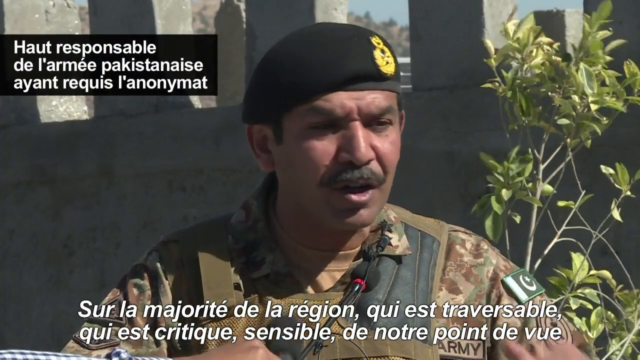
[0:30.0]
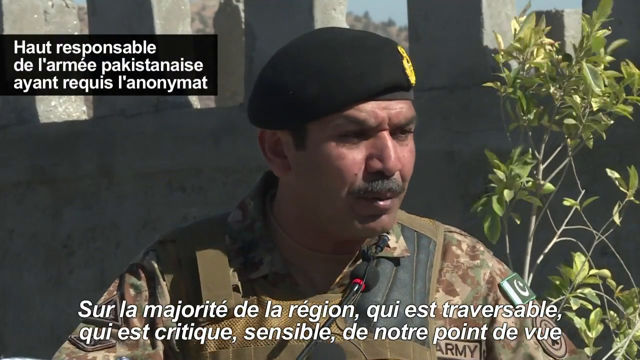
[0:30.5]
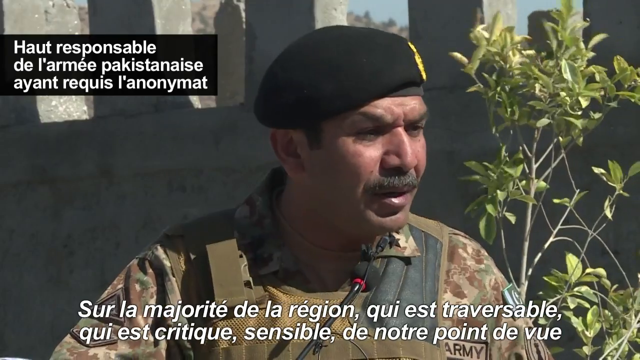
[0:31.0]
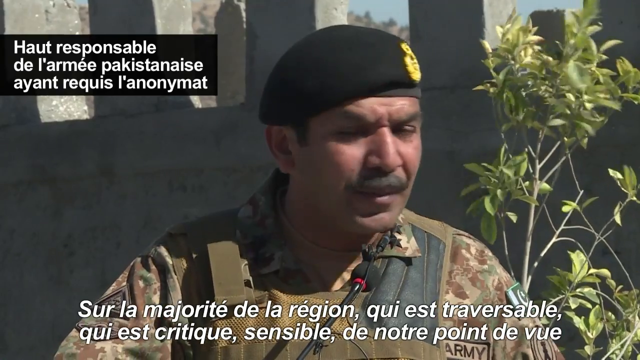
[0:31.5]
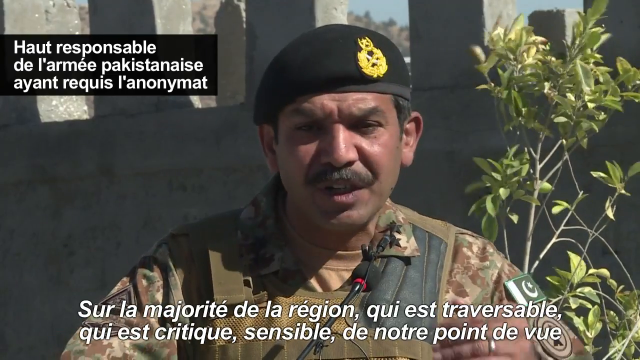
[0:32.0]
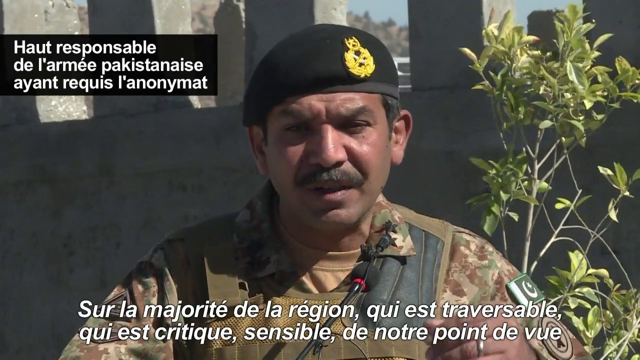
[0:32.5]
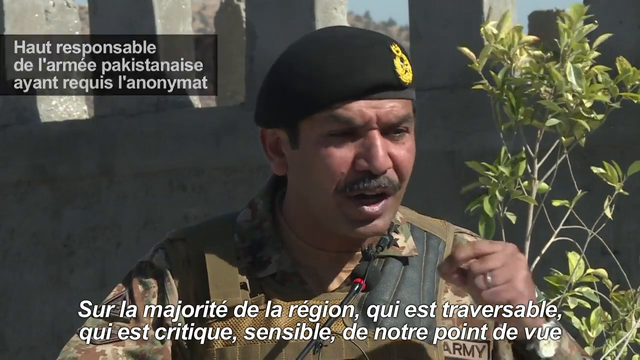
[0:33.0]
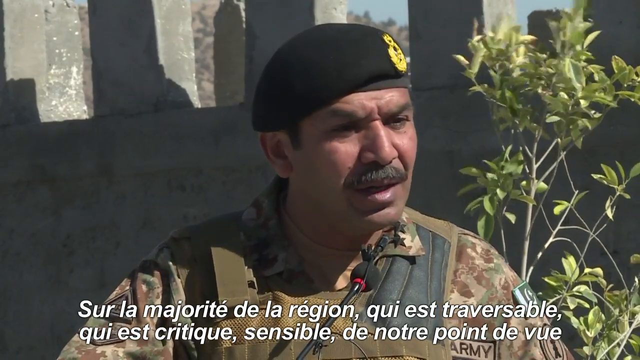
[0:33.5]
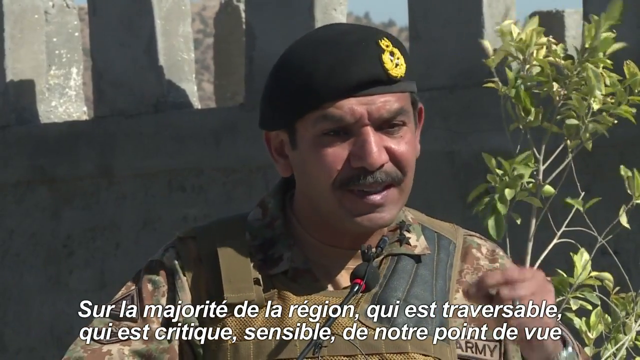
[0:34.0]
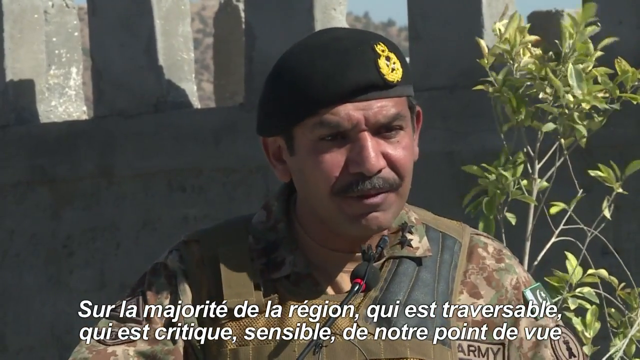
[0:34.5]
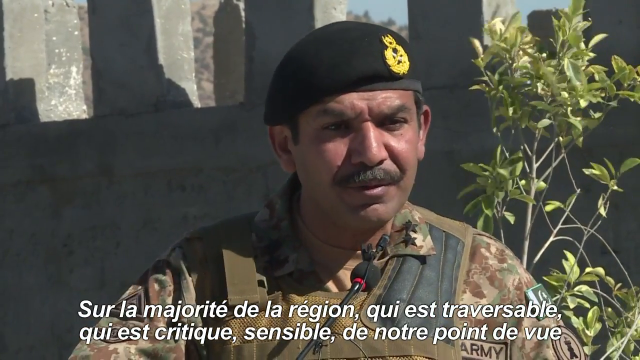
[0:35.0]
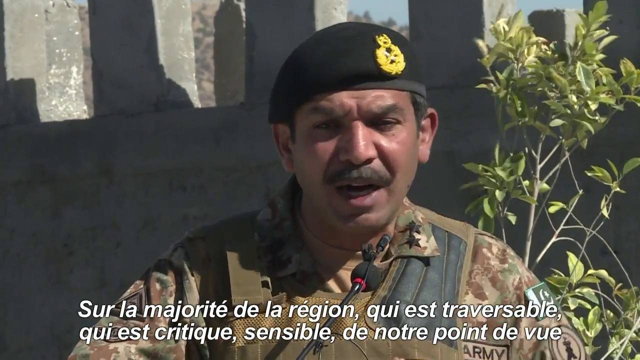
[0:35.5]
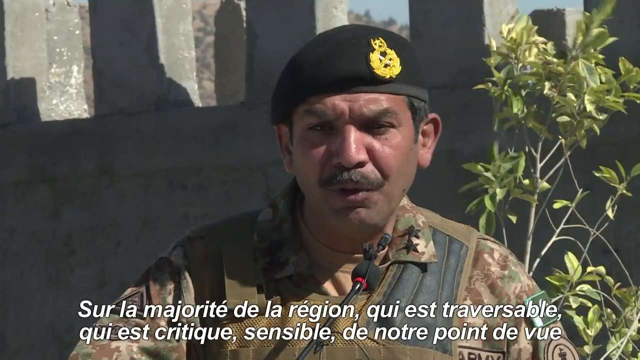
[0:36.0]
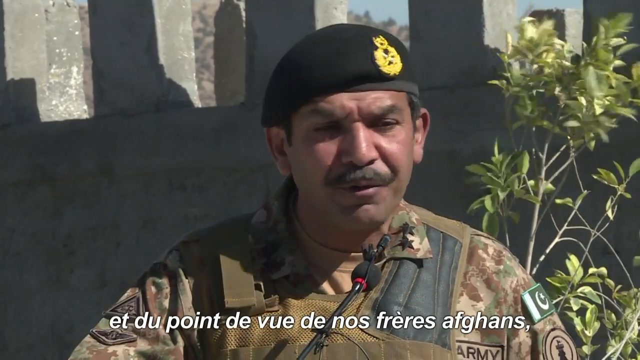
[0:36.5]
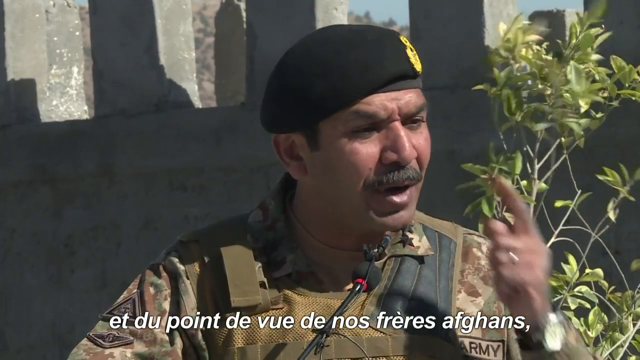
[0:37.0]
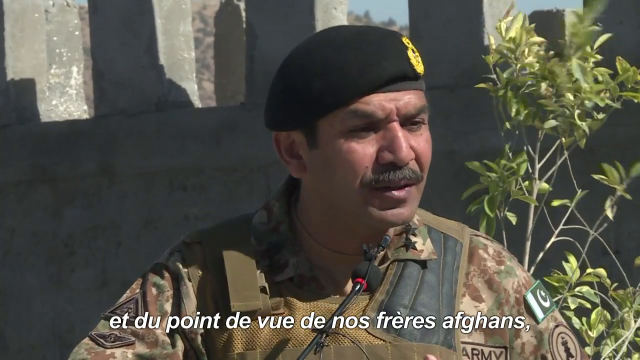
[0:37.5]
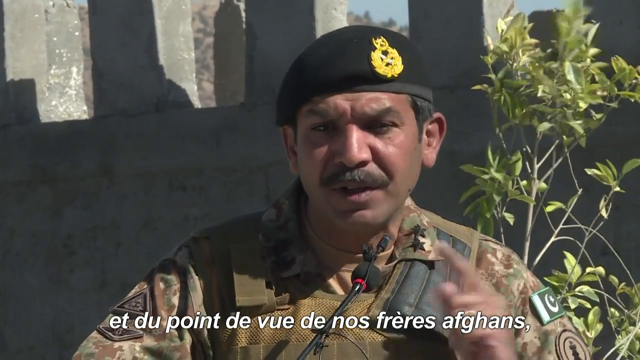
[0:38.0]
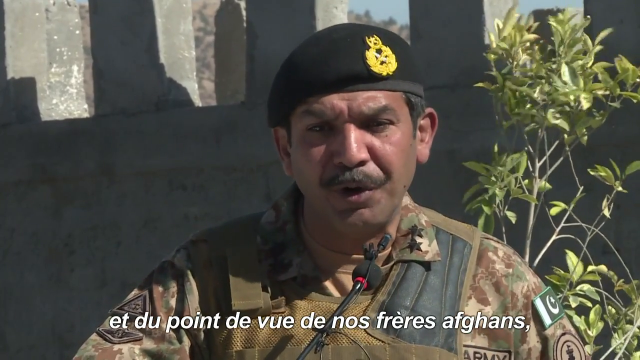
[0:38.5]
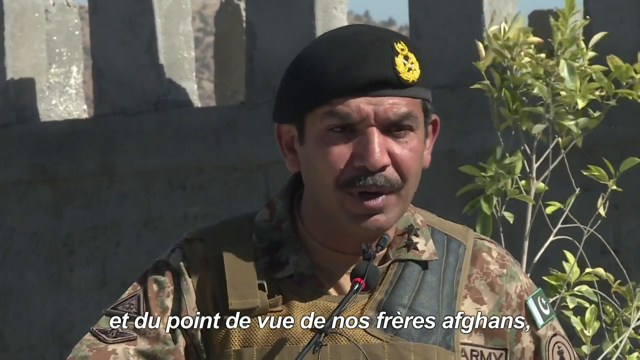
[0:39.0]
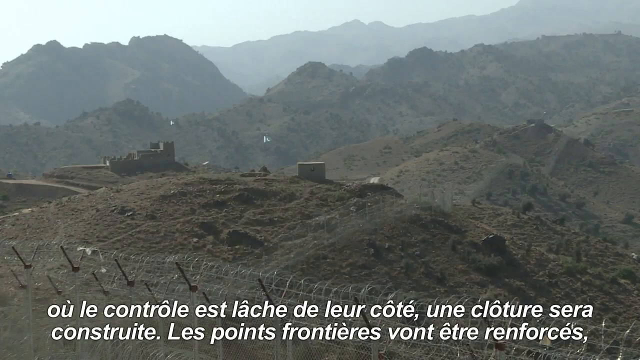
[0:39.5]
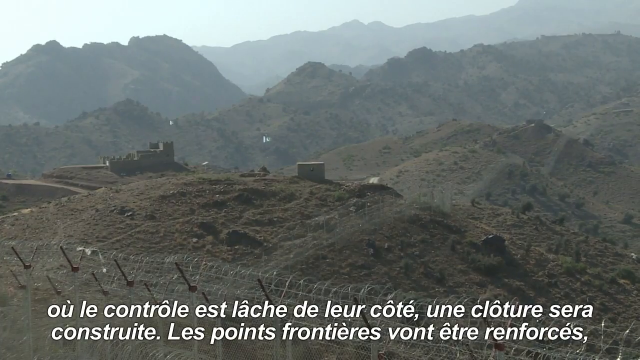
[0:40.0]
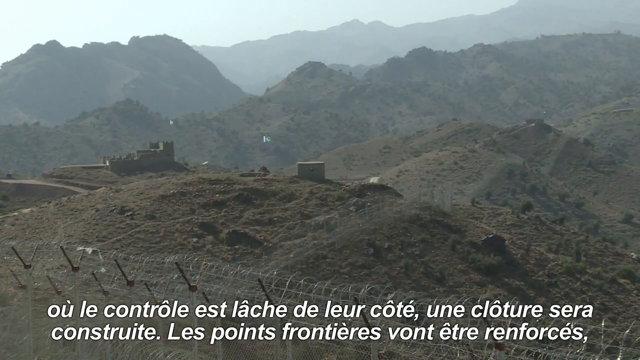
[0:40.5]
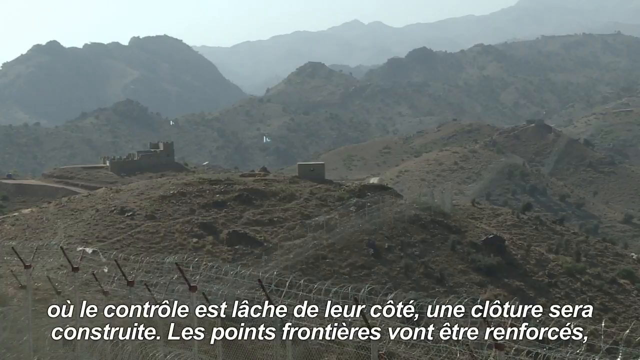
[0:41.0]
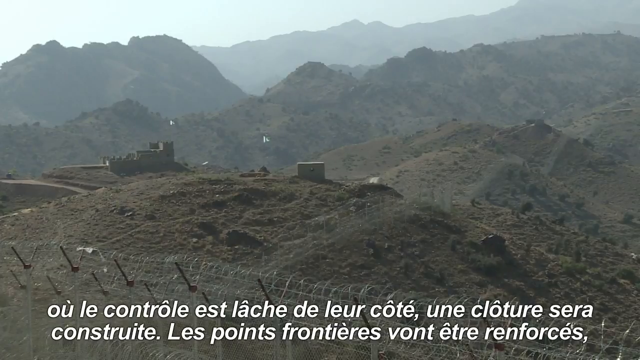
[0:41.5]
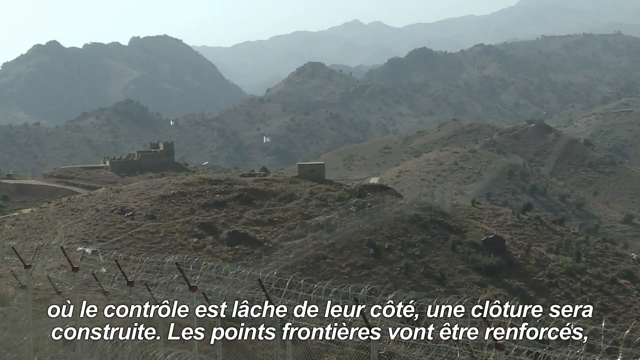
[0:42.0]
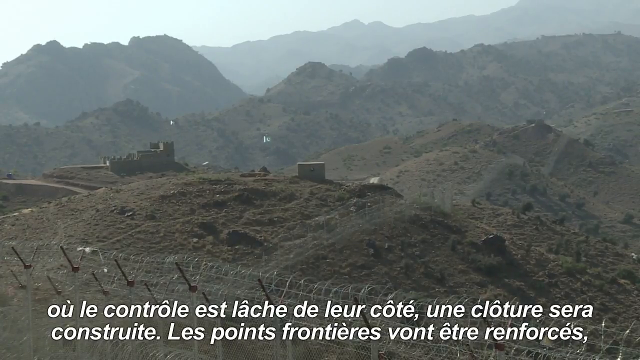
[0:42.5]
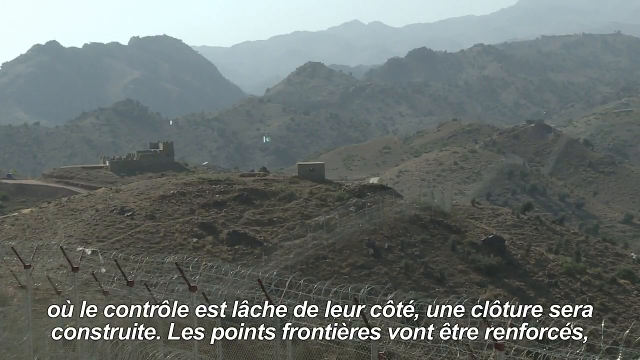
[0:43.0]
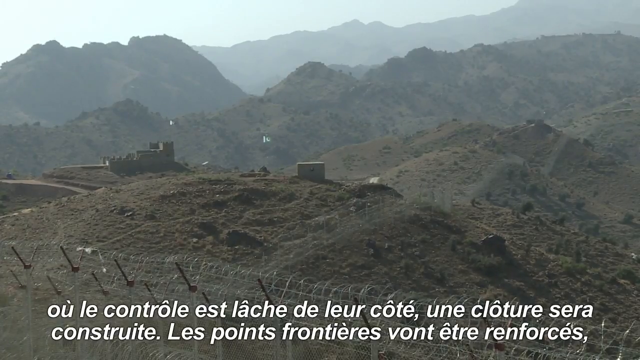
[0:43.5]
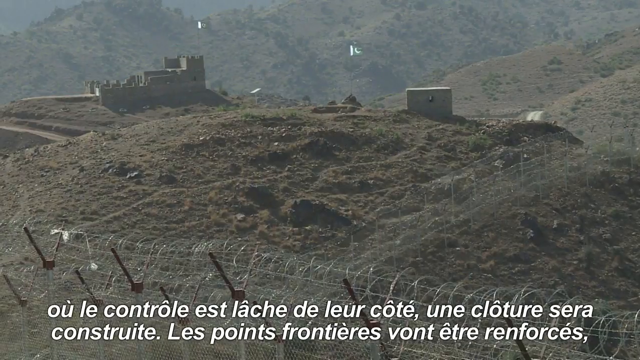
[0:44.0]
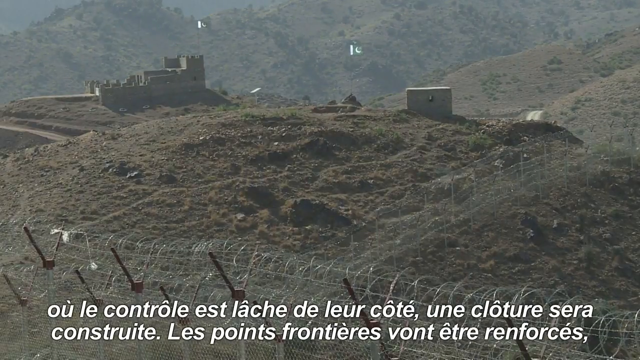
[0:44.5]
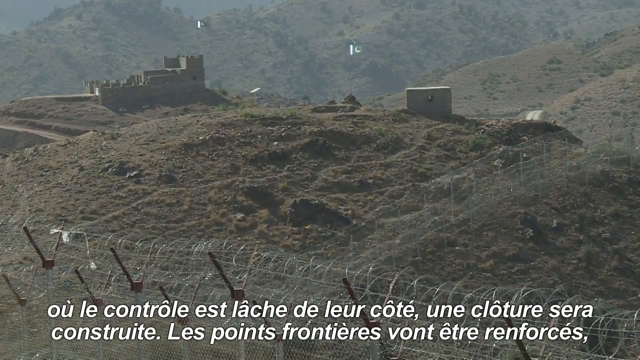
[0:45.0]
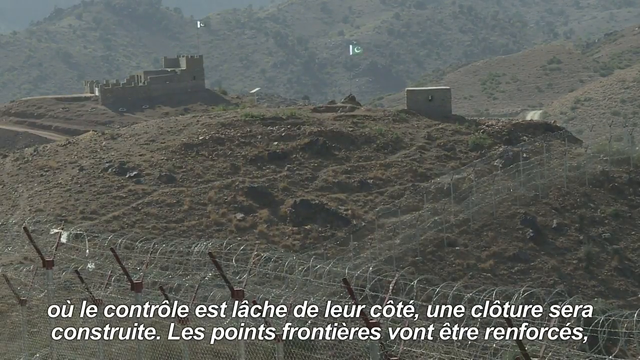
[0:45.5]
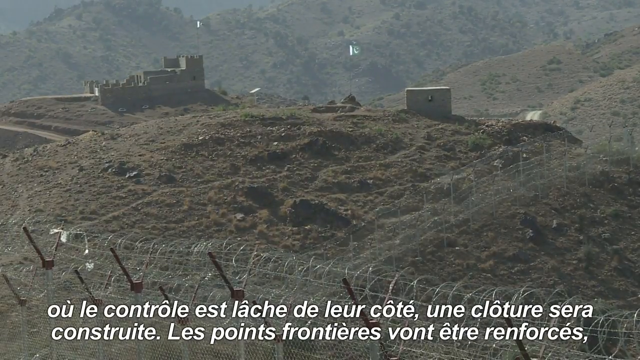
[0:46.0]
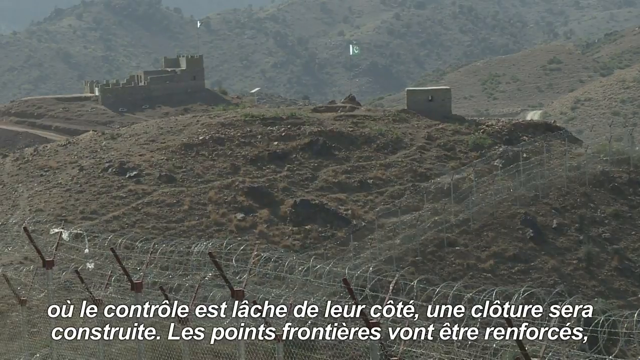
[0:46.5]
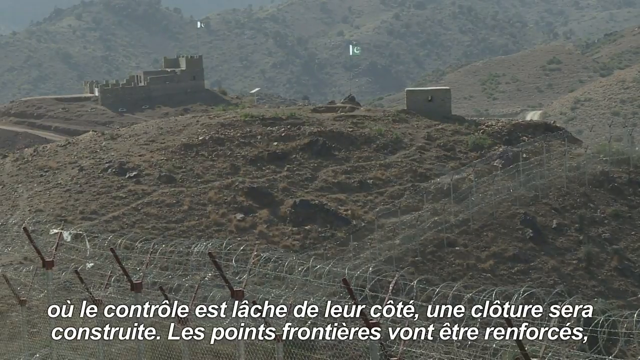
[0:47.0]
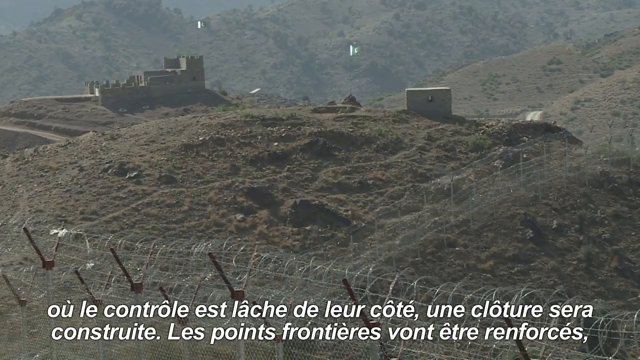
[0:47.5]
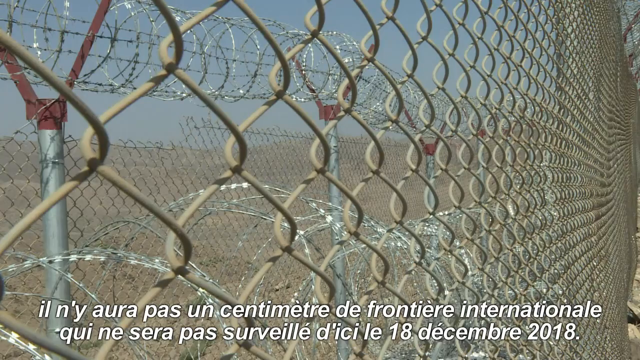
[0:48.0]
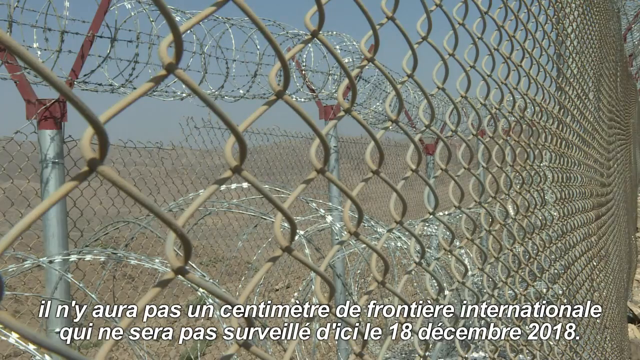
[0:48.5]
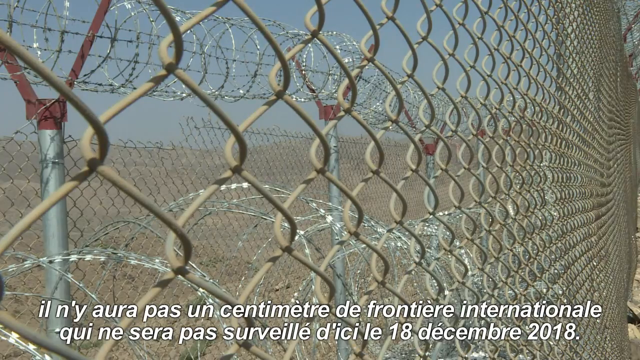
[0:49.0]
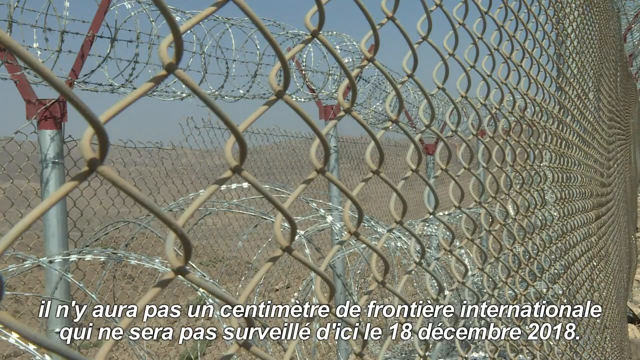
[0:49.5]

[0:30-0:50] A man wearing a black soldier's hat is talking, apparently explaining something about the army camp. Wire fences the place, and some buildings are on top, possibly used as lookouts to watch the area. There are trees, and the place seems built inside the bush, with only the houses visible. A big mountain and different types of mountains are in view. Something is on top, possibly a flag, though it looks like a white object. Soldiers are visible.